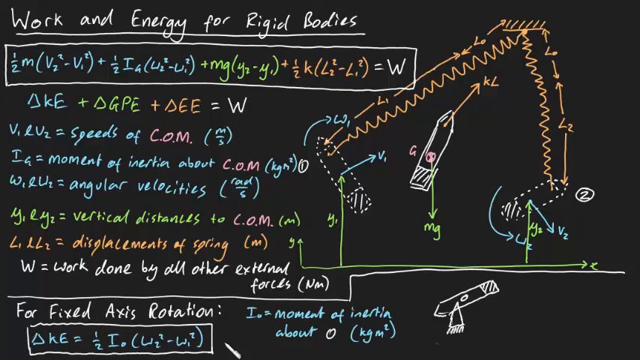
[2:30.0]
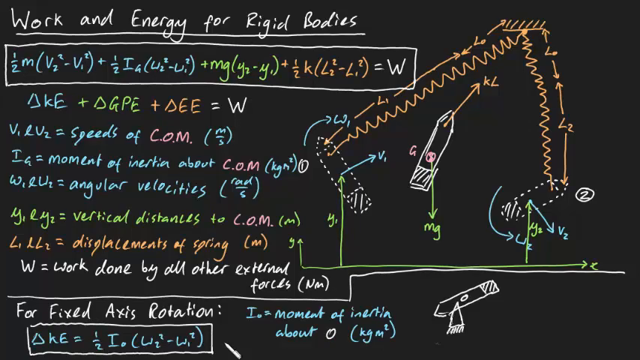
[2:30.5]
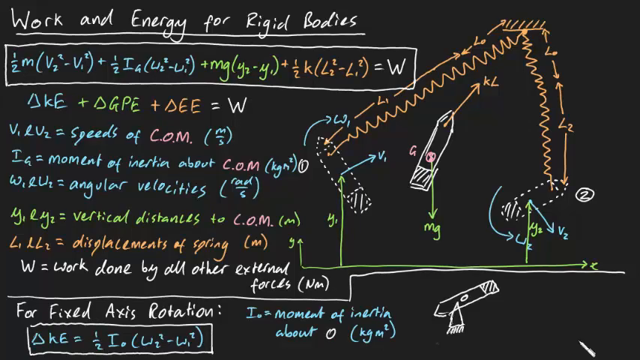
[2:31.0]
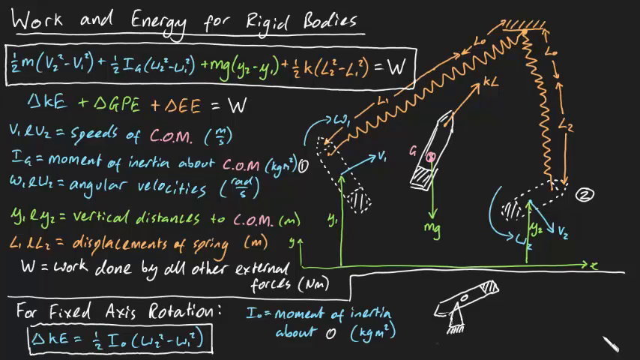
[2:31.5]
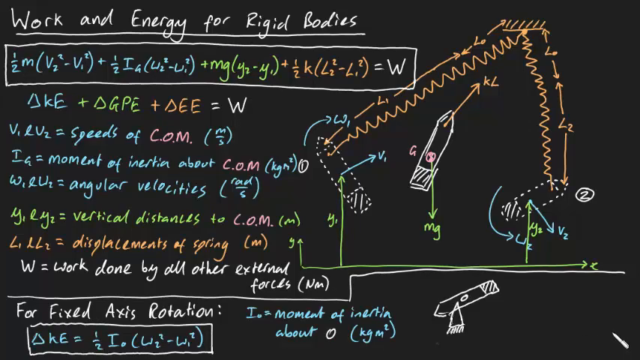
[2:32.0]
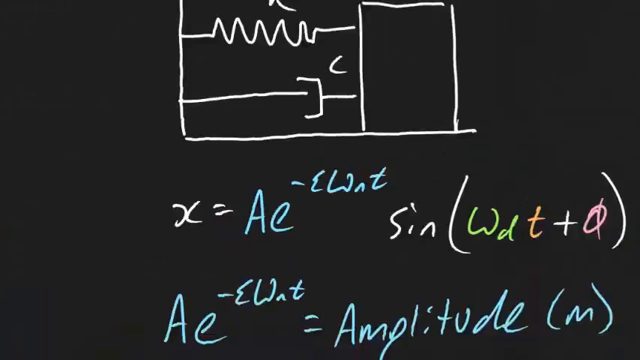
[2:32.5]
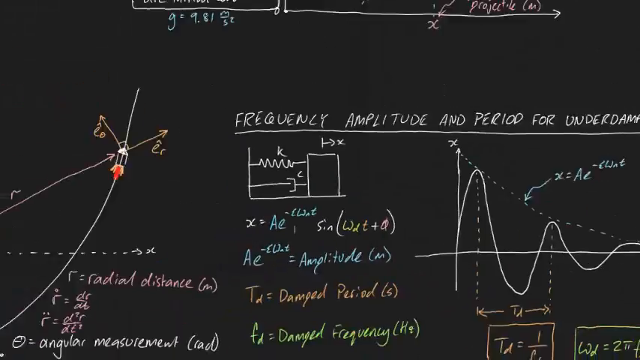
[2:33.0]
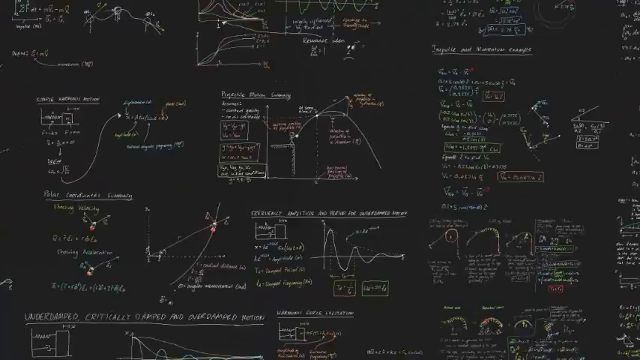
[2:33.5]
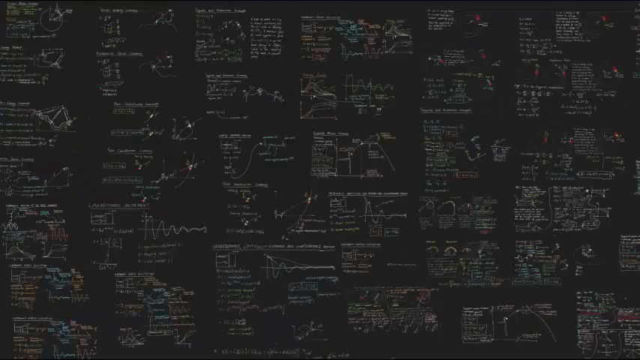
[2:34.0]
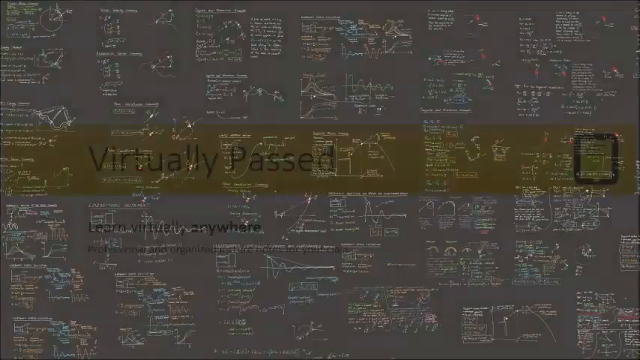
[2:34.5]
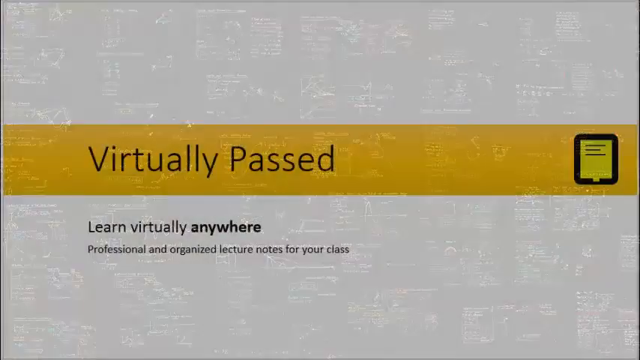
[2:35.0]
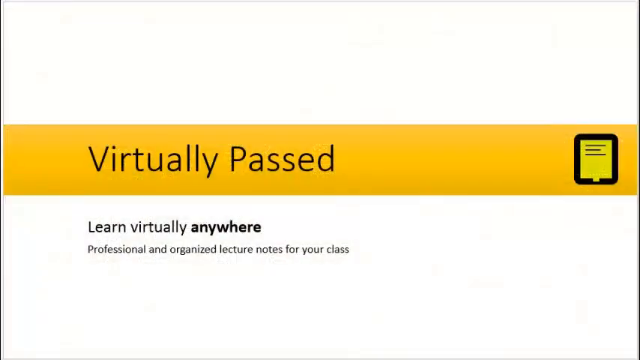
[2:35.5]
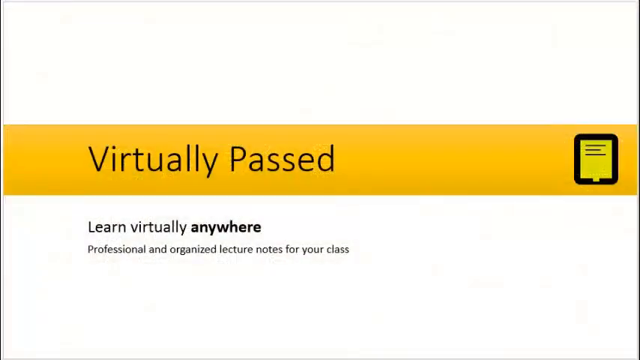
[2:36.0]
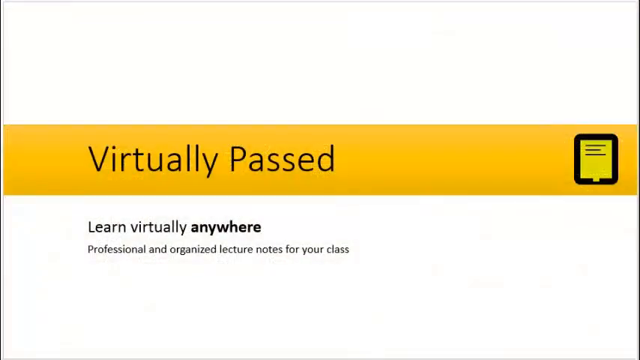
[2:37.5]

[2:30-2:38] The white cursor is in the lower right corner of the image. After a few moments, the view widens, revealing many other mathematical formulas and many graphics. The screen then shows a yellow graphic with a white background and off-center writing inside, on the left side of the black image. On the right there is an icon of a yellow folder with a fairly thick black border. At the bottom left there are other black words of different sizes on a white background.